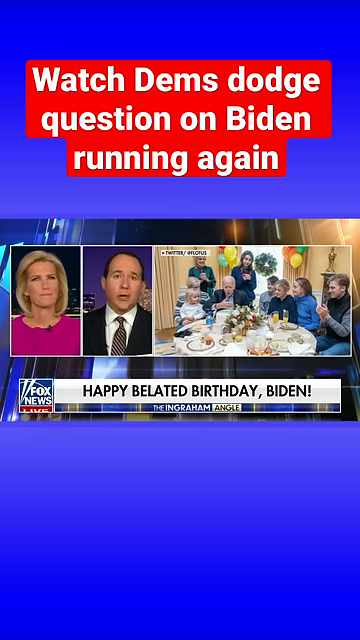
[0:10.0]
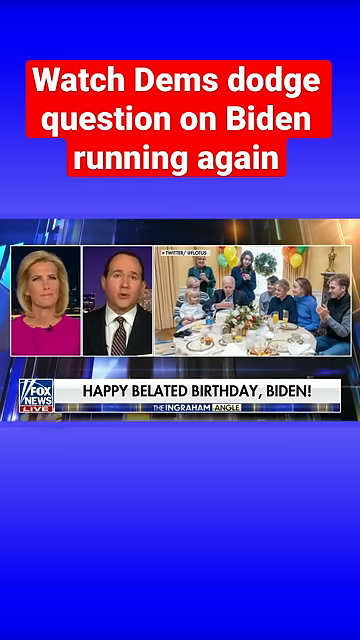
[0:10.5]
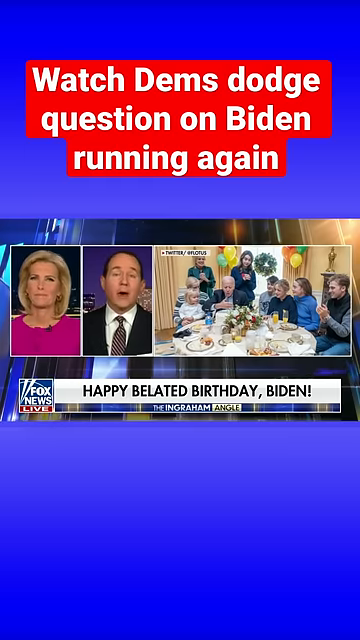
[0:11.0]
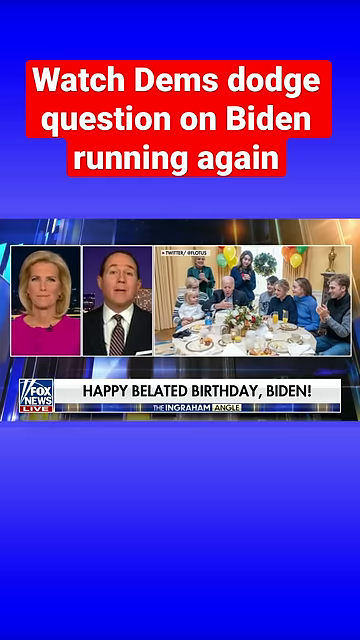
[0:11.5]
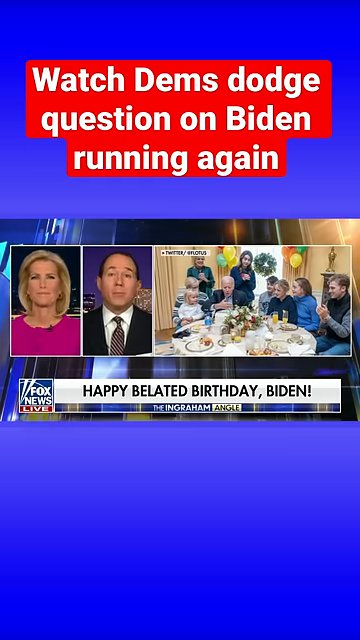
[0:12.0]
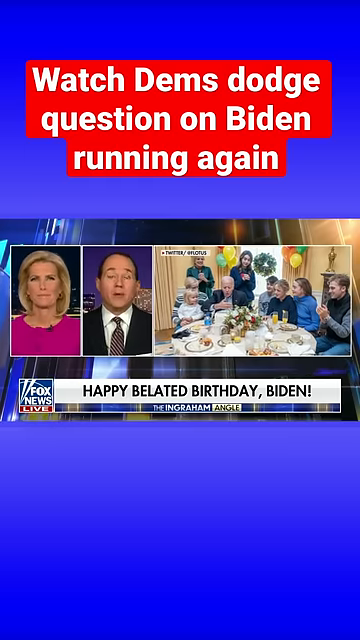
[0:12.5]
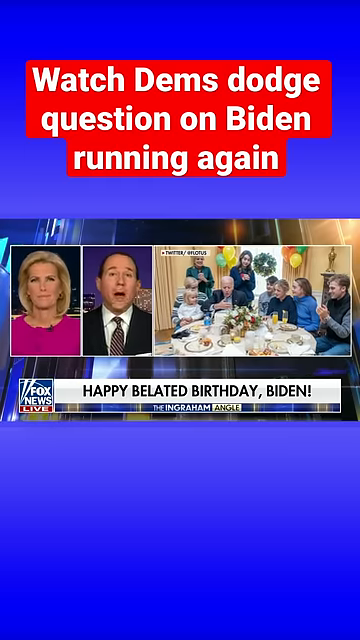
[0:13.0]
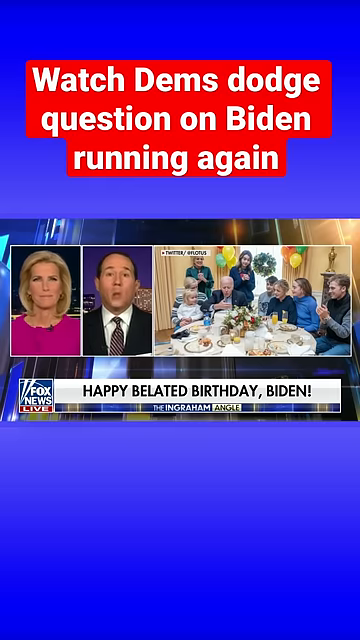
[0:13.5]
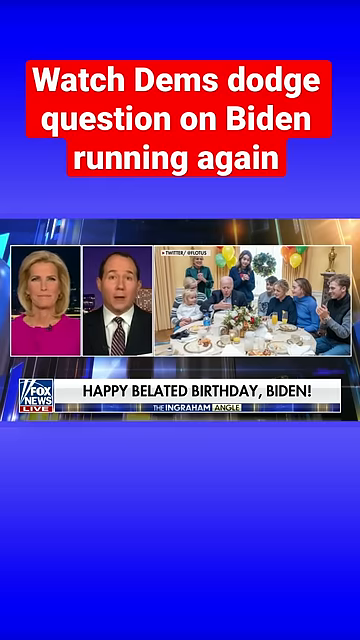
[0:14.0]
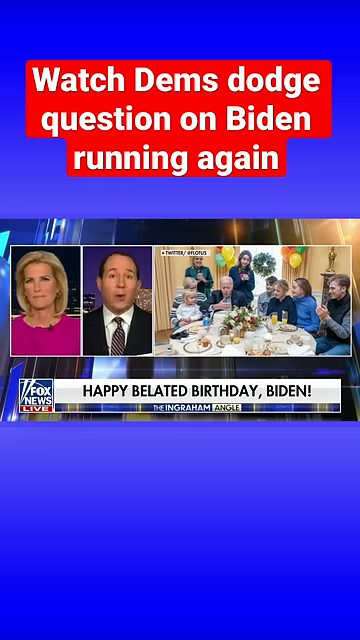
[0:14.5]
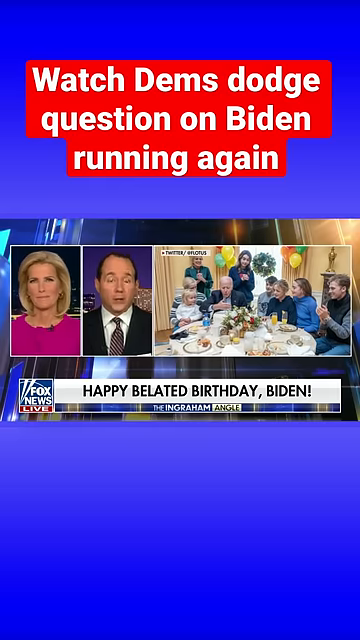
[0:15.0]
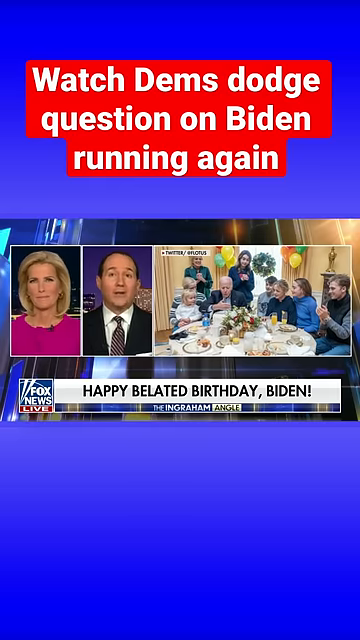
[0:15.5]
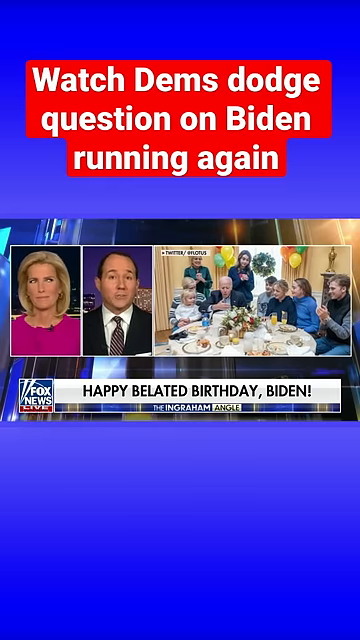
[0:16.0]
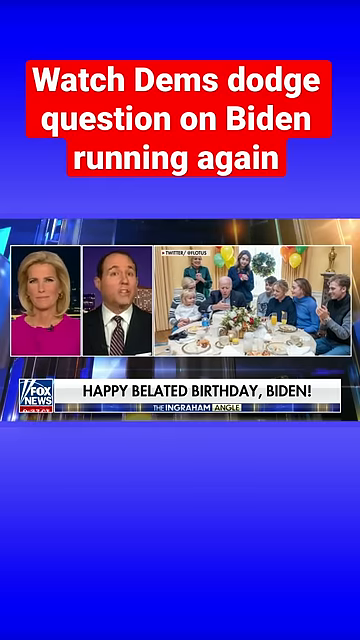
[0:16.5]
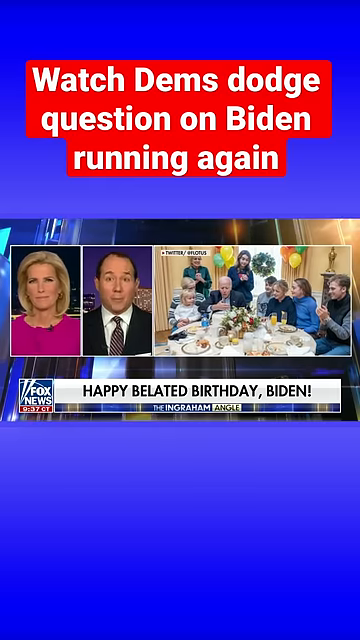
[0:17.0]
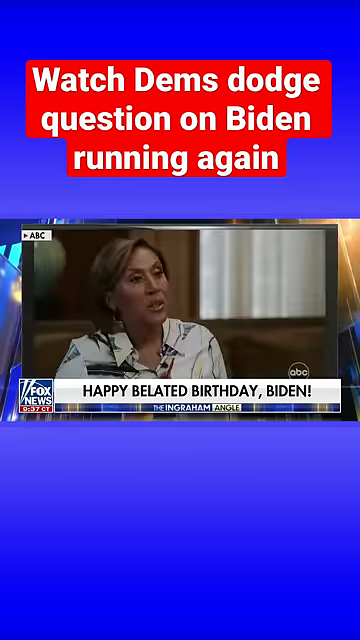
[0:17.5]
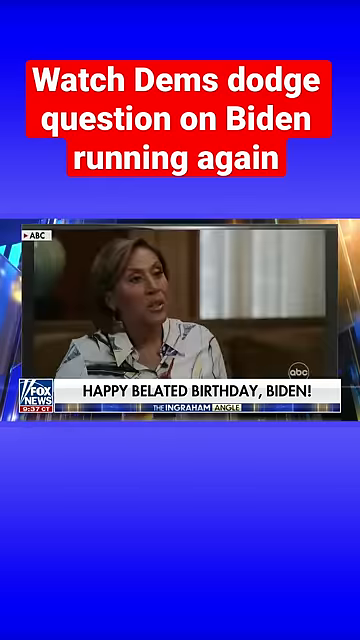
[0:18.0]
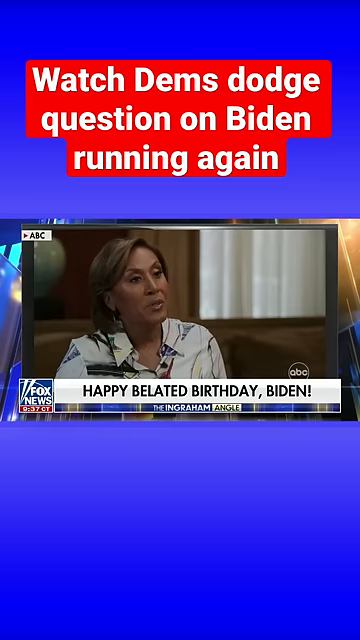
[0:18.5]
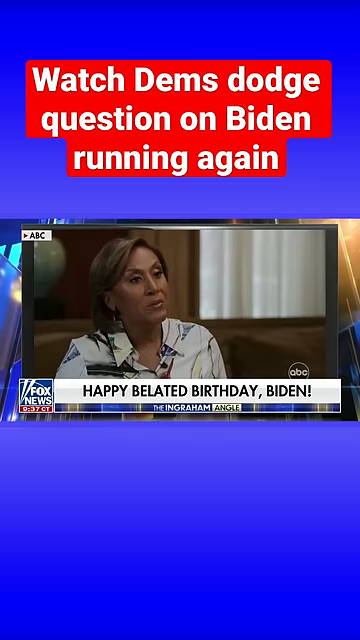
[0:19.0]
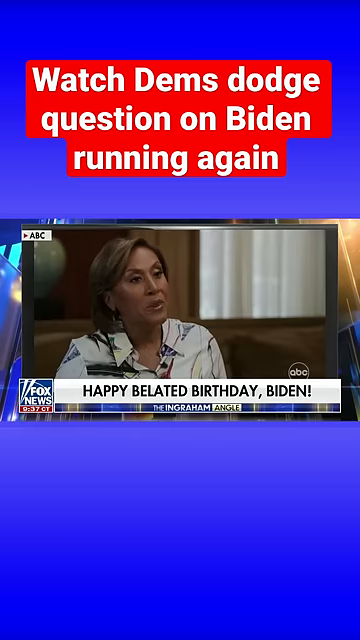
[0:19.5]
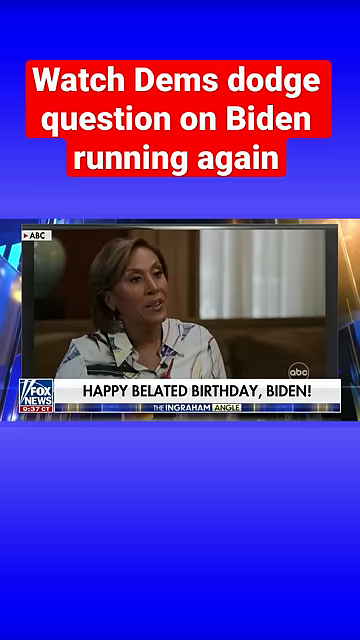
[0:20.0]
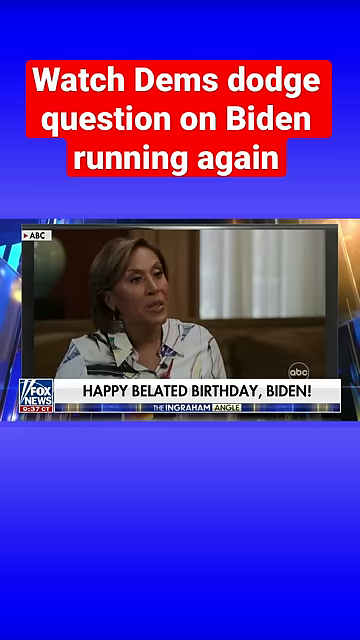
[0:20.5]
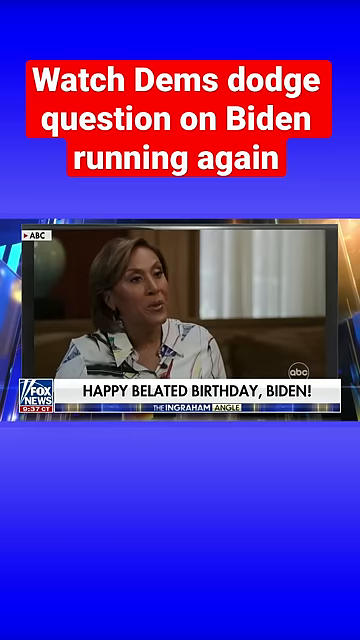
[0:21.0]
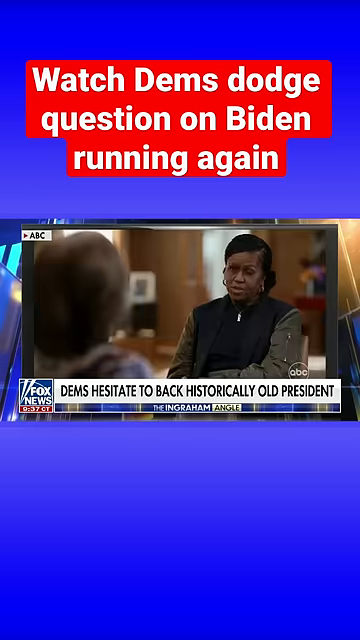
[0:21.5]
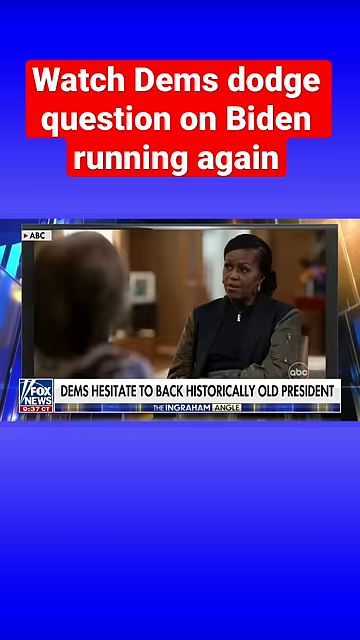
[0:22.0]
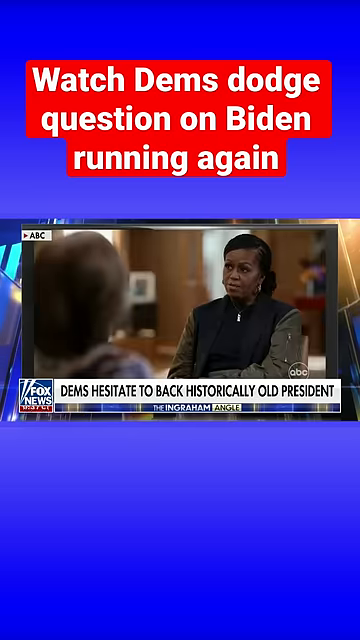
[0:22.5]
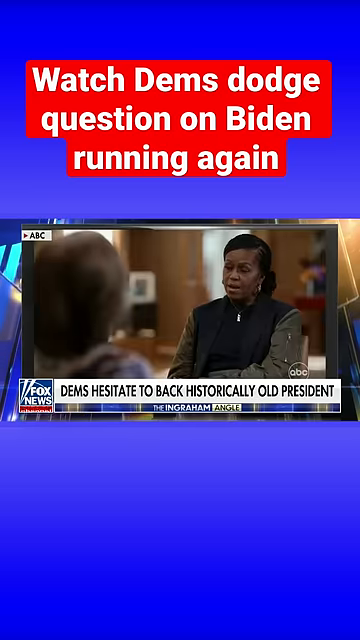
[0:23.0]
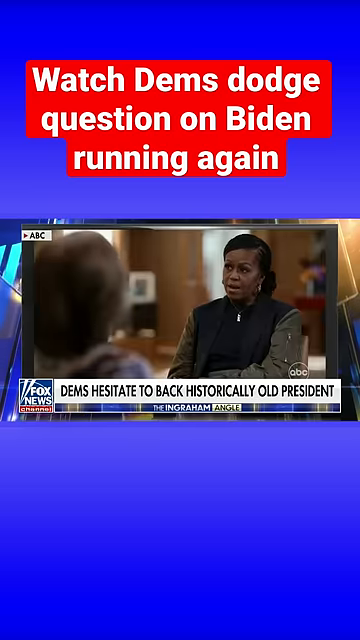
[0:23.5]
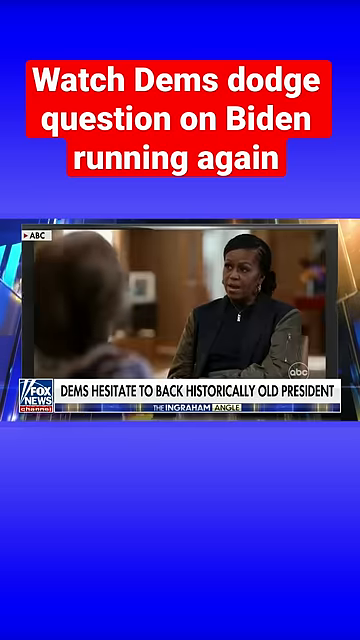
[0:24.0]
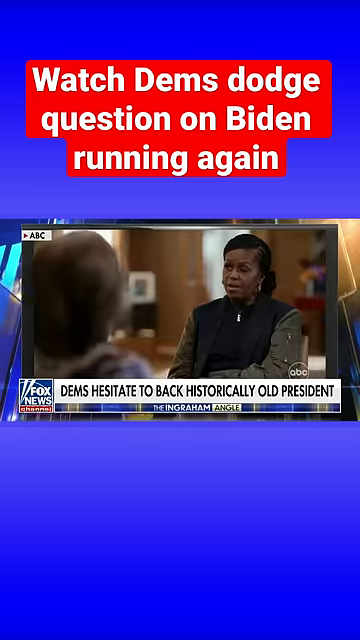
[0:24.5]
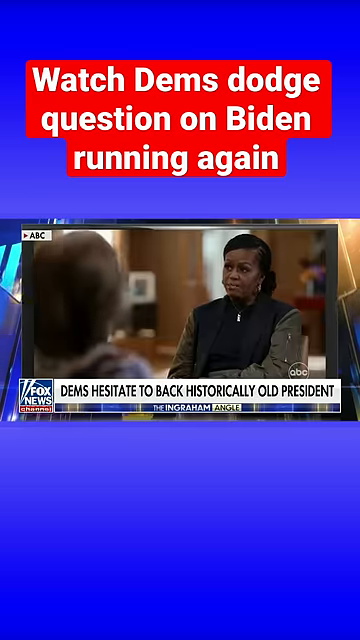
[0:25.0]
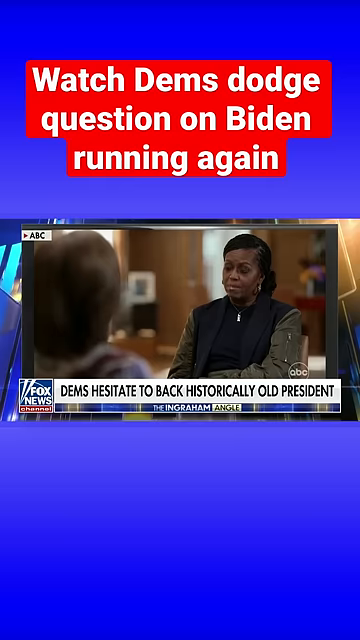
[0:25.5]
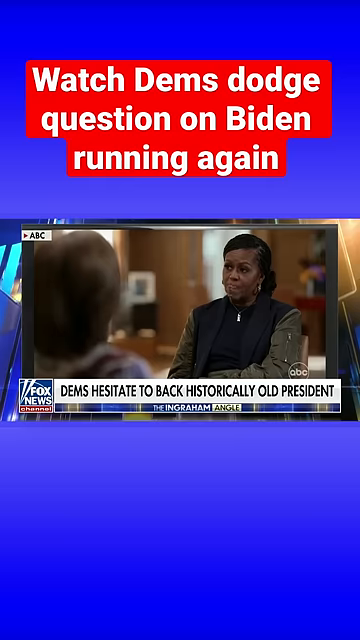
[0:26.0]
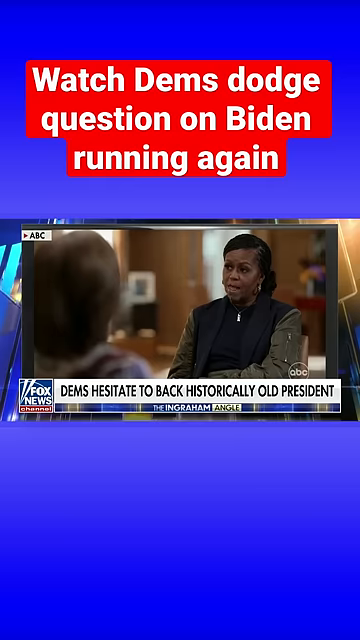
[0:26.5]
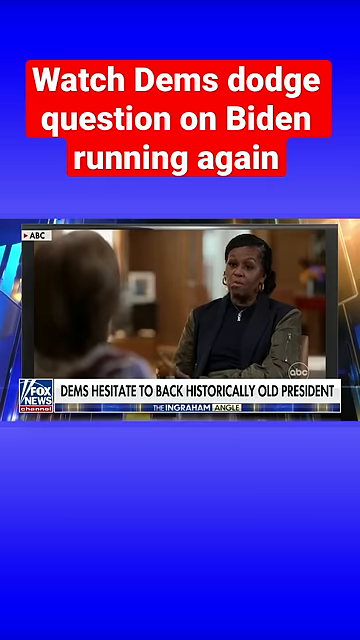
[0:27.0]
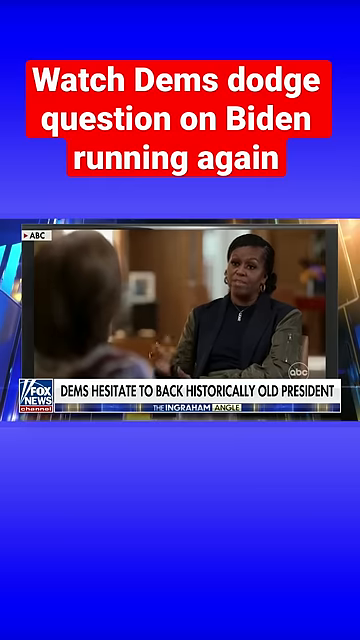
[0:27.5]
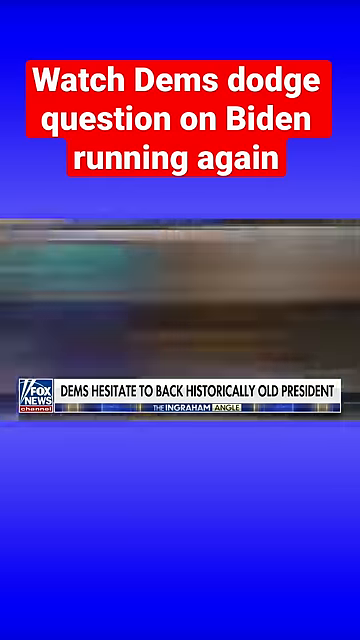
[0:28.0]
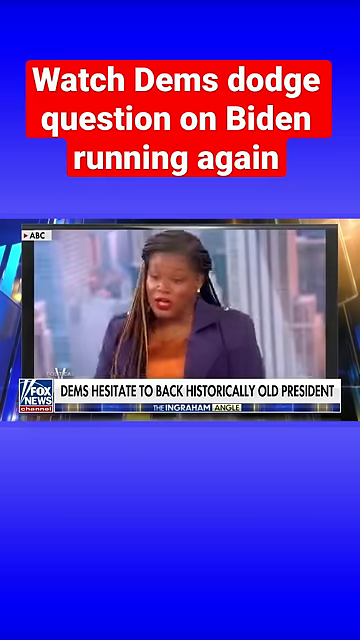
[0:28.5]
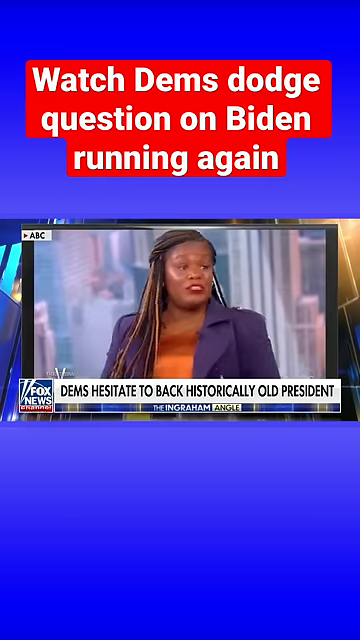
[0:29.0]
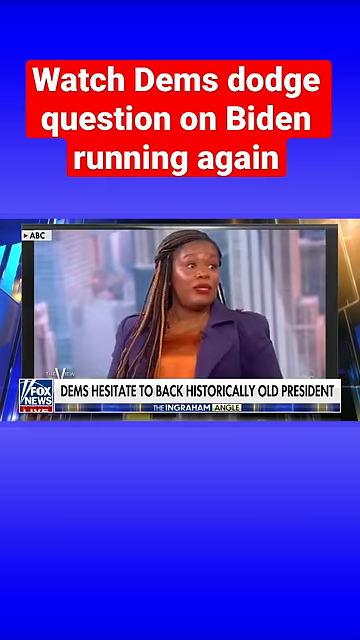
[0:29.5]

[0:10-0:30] Text apparently reads "happy belated birthday Biden" alongside a Twitter picture of Biden and his family celebrating his birthday. More Fox News coverage of Biden turning 80 follows. A woman then appears on ABC in a segment about Democrats hesitating to back a historically old president. Michelle Obama appears on ABC, apparently on the subject of whether Biden should run again. Another woman, wearing a blue blazer over a shirt, then appears on another news channel, apparently discussing whether Biden should run for president at his age.